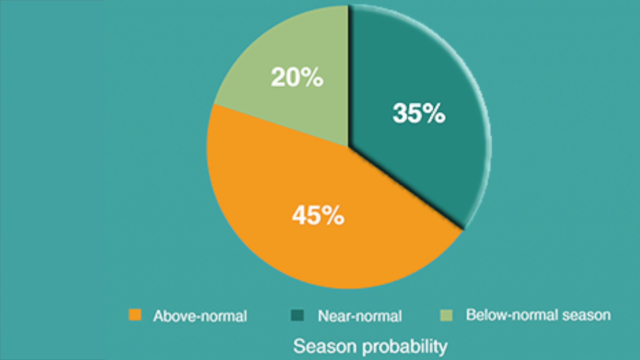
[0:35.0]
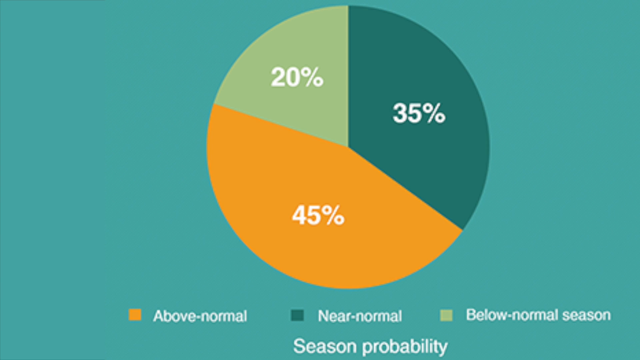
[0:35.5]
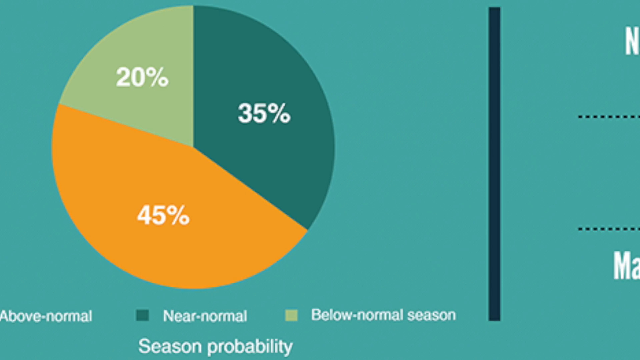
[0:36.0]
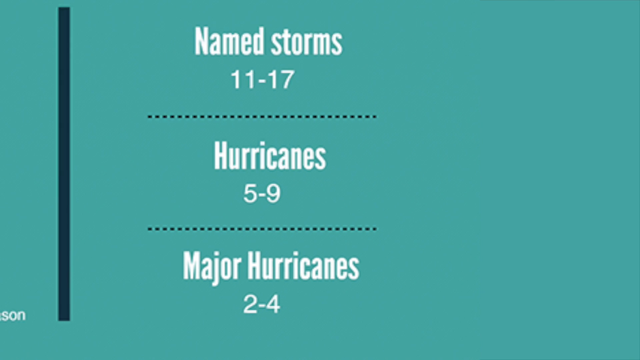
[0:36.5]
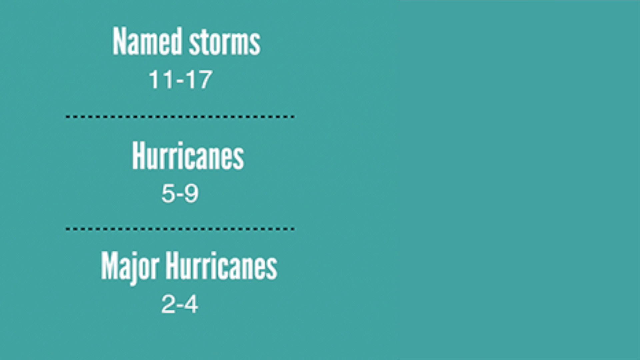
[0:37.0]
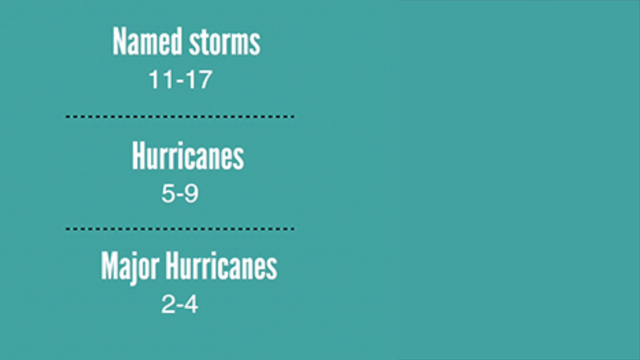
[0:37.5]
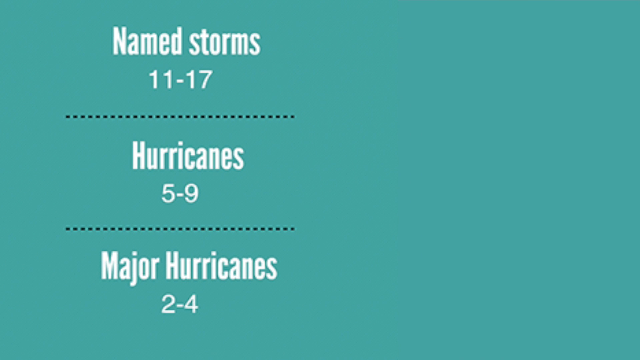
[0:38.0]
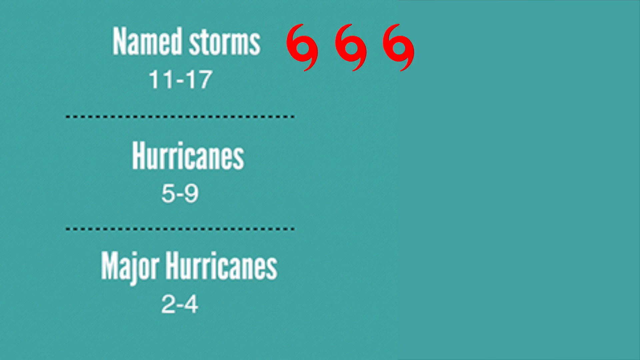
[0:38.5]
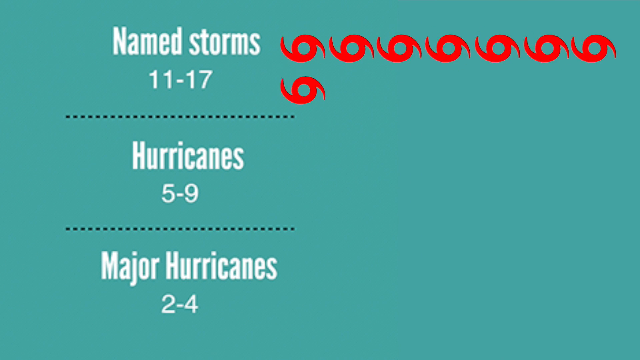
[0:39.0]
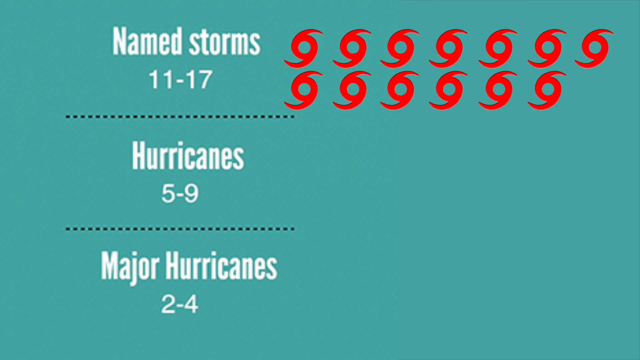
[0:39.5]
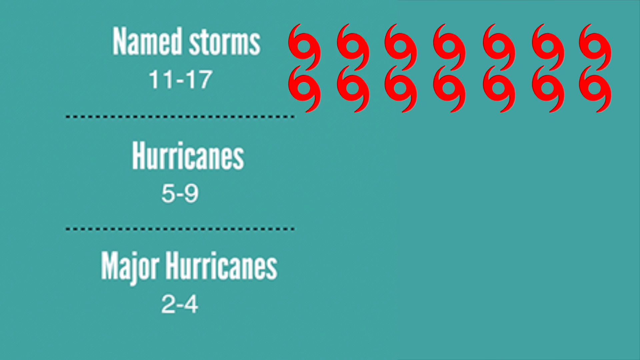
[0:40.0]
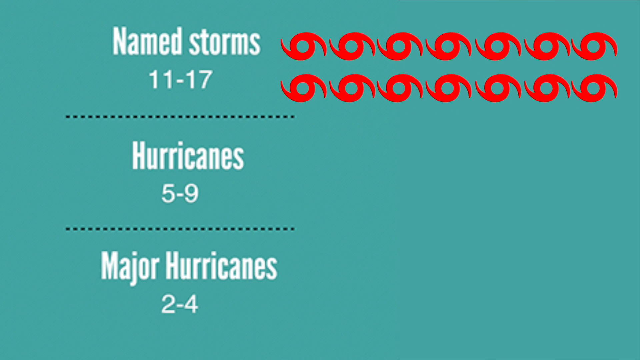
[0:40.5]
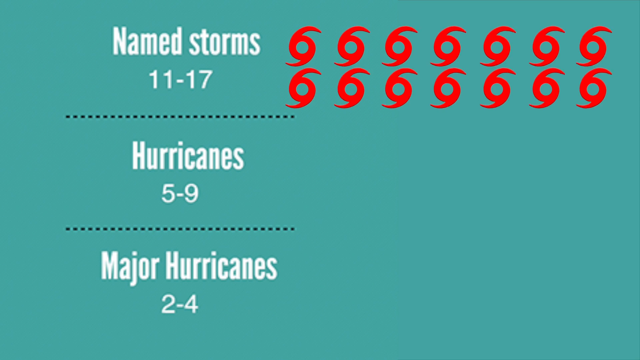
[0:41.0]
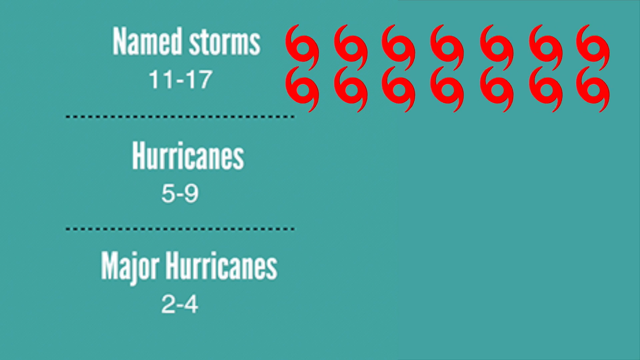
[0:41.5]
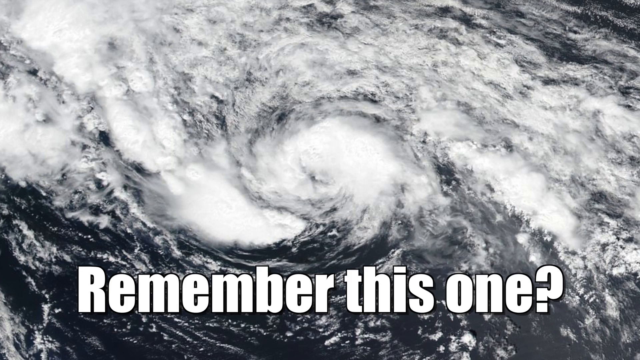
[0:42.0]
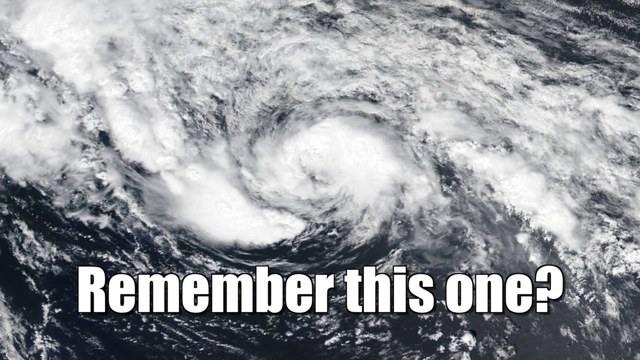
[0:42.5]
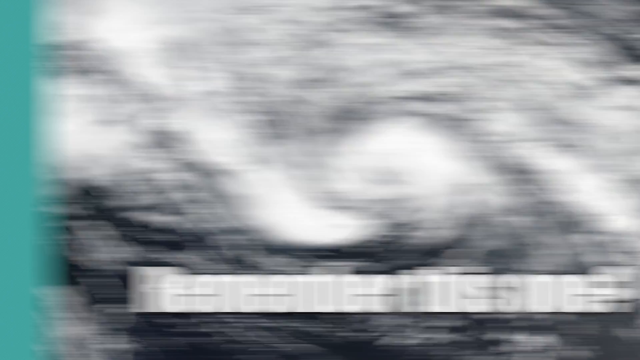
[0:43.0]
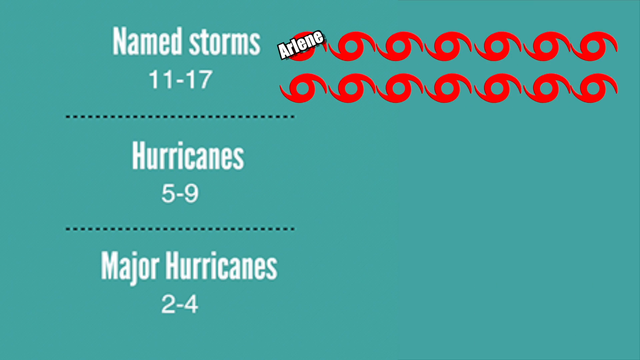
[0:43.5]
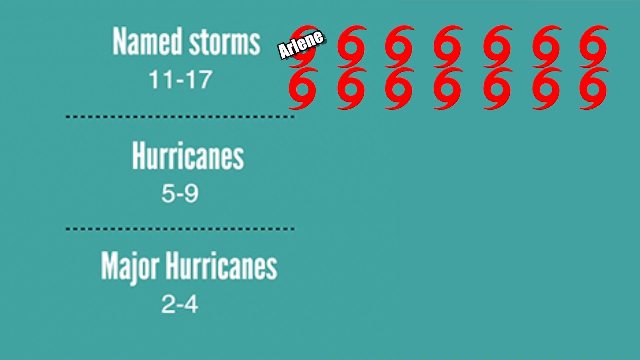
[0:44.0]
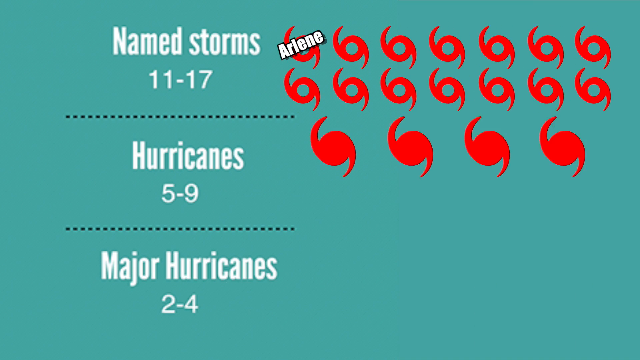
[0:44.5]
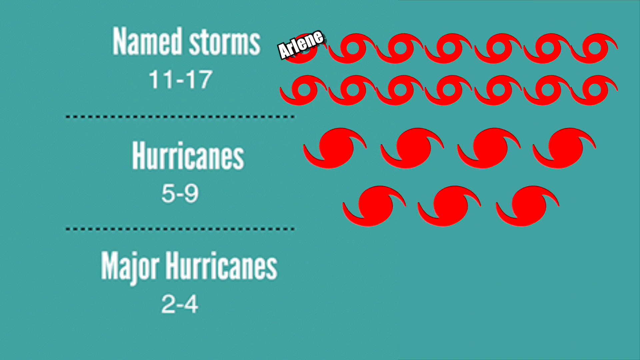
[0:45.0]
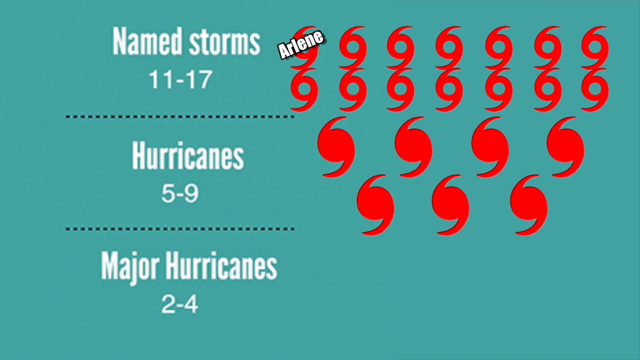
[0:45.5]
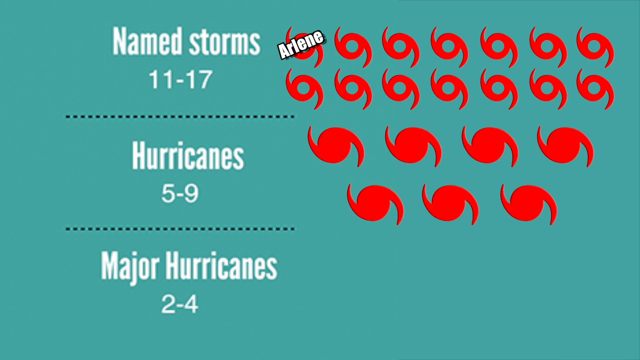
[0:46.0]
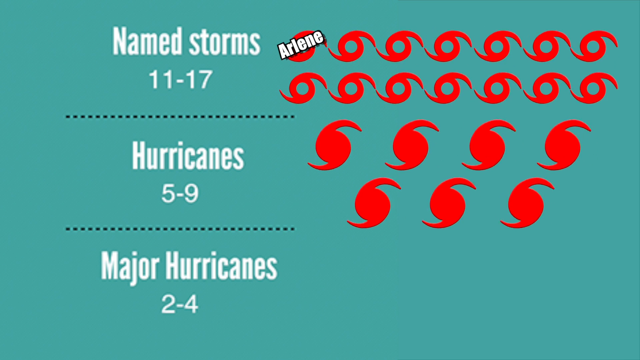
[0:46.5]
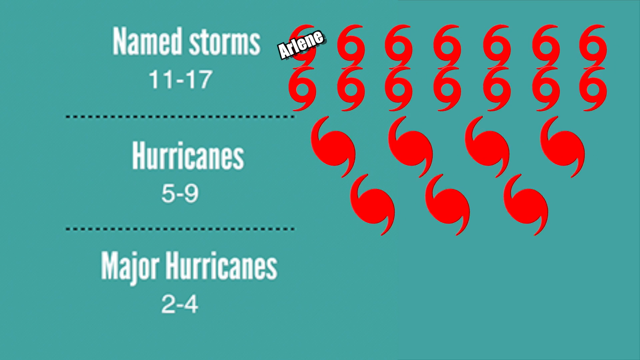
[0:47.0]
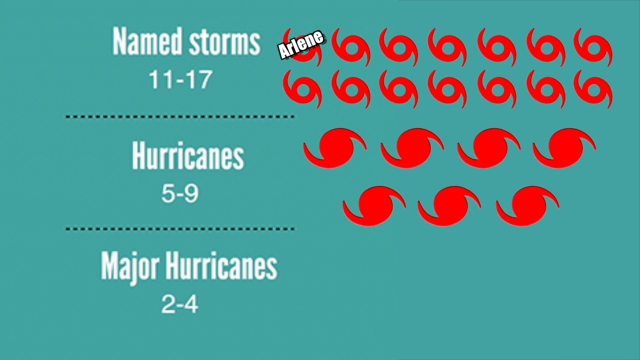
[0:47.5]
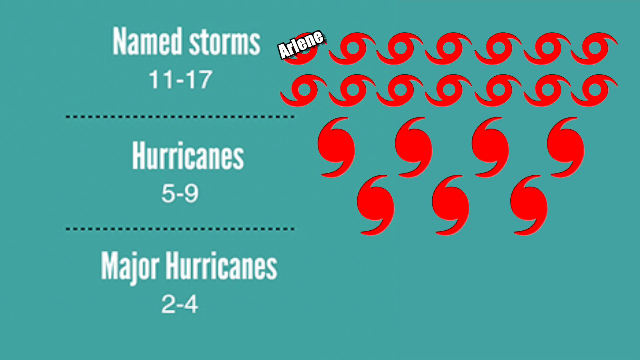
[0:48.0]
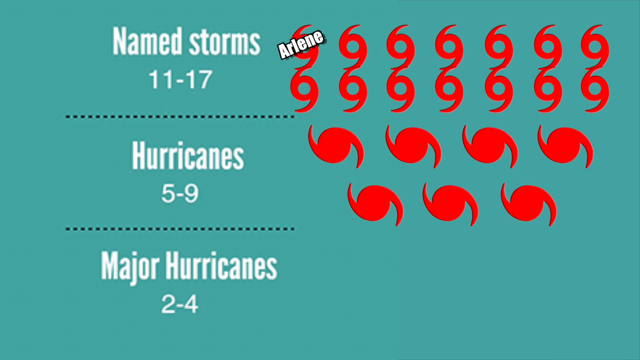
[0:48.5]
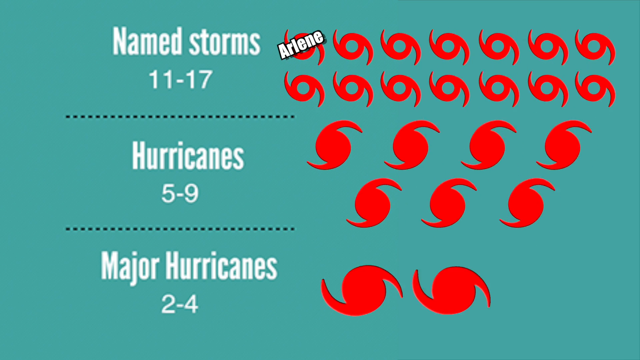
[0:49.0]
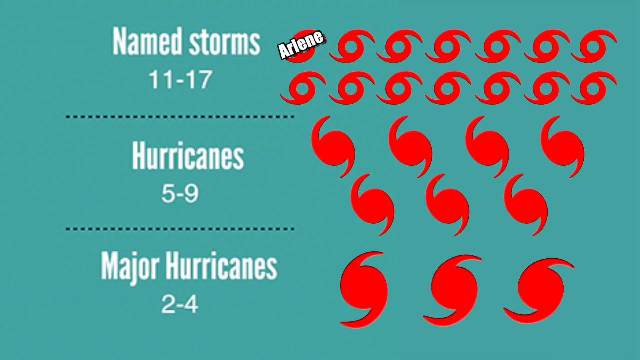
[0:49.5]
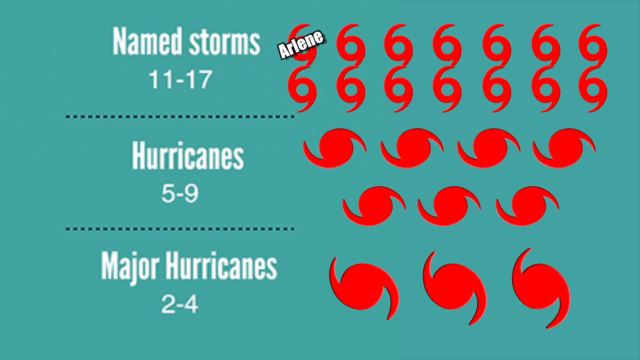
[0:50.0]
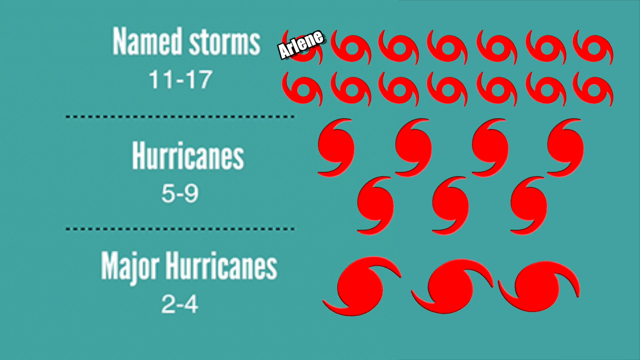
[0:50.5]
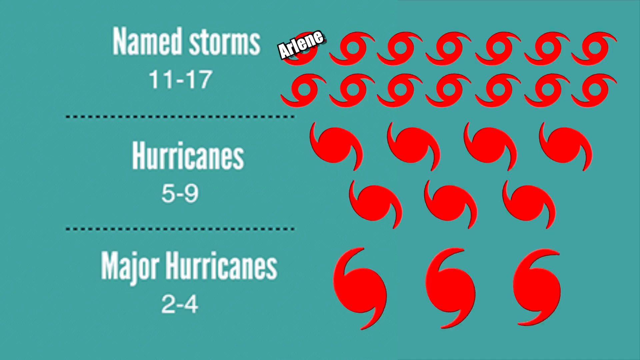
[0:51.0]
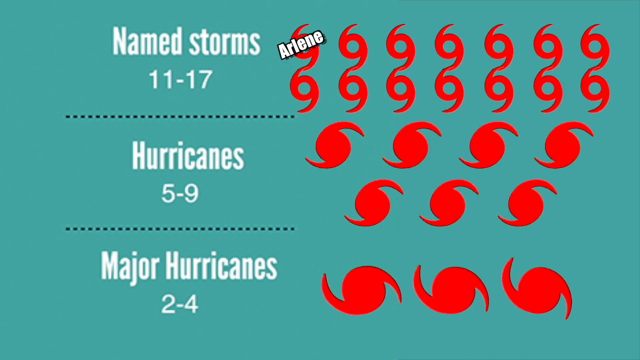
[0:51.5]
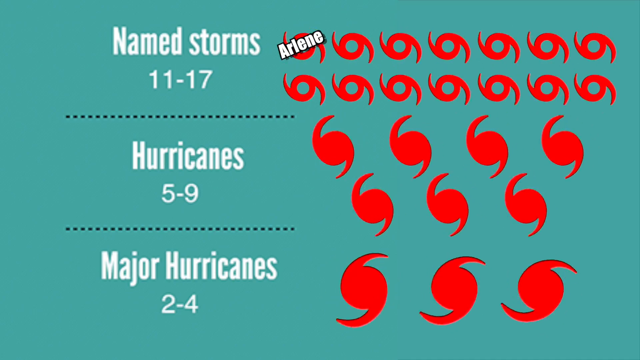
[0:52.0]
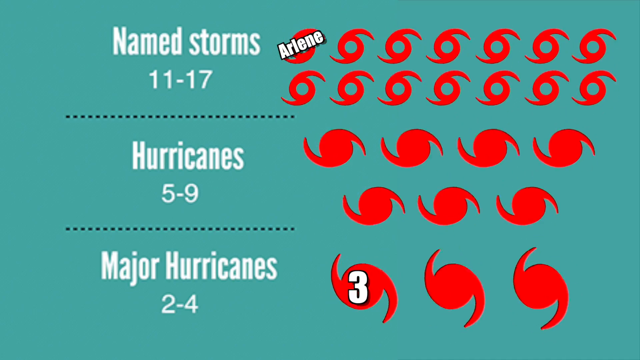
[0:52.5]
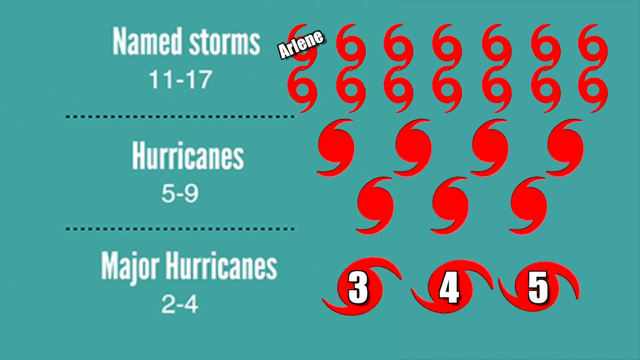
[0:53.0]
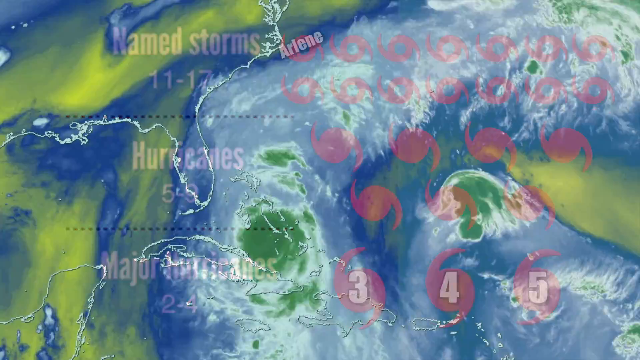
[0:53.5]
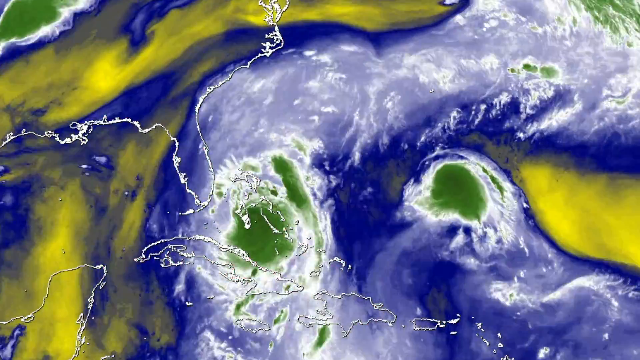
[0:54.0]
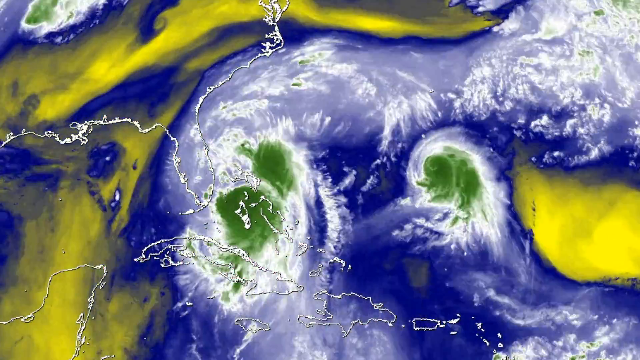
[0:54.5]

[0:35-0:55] The view focuses on the right side of the graphic: named storms 11 to 17, hurricanes 5 to 9, and major hurricanes 2 to 4. Small hurricane graphics appear next to each of these sections, becoming larger further down the list. Over the first hurricane graphic, at the very top by named storms, "Arlene" appears, and the major hurricane graphics show 3, 4 and 5 over each of them. The graphic then fades away to a radar image of the Atlantic Ocean with hurricanes forming over the ocean and spinning toward the southeast of the United States. There appear to be two storms: one larger than the other, closer to Florida, and the other out in the middle of the Atlantic.